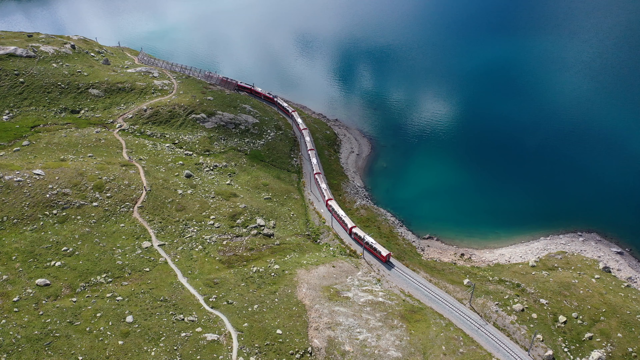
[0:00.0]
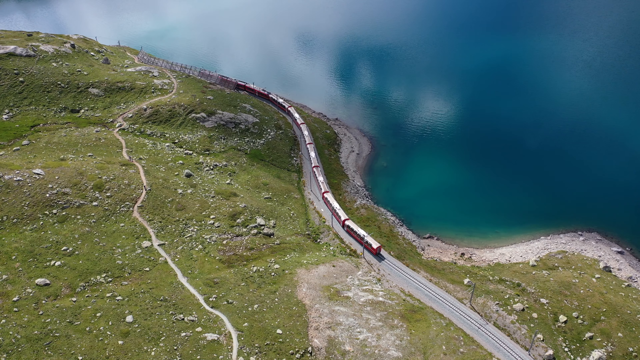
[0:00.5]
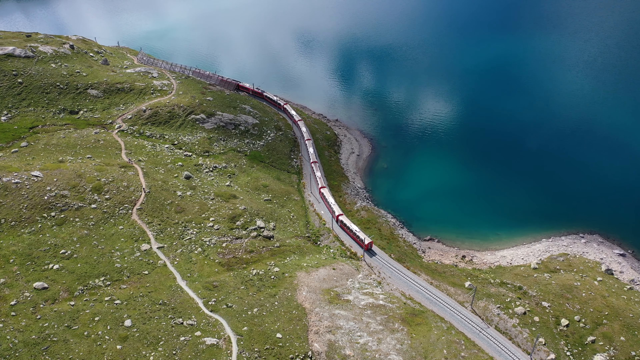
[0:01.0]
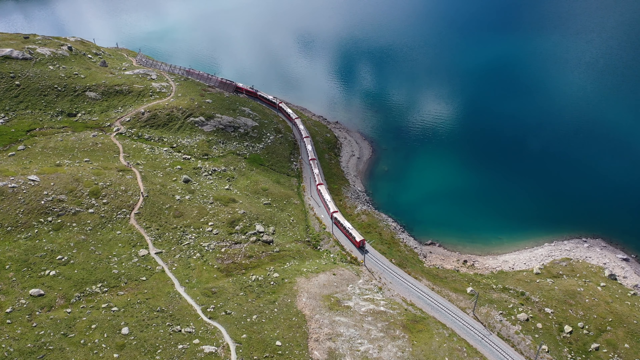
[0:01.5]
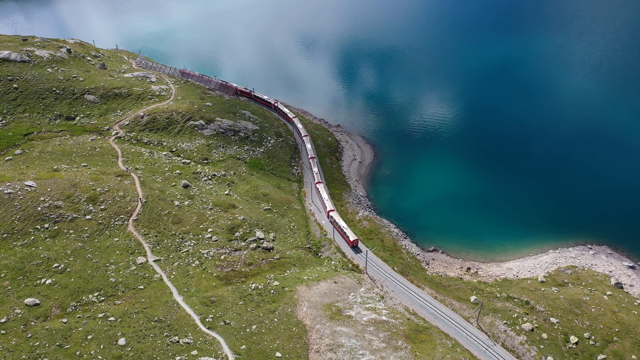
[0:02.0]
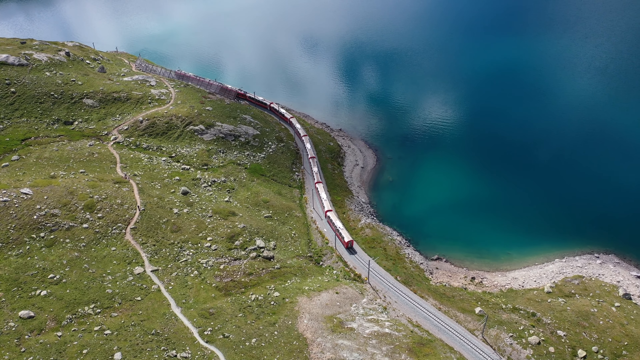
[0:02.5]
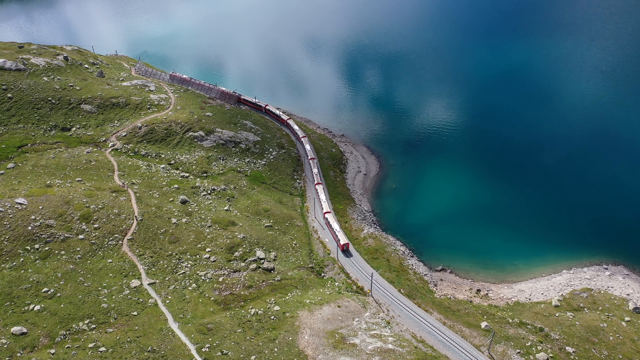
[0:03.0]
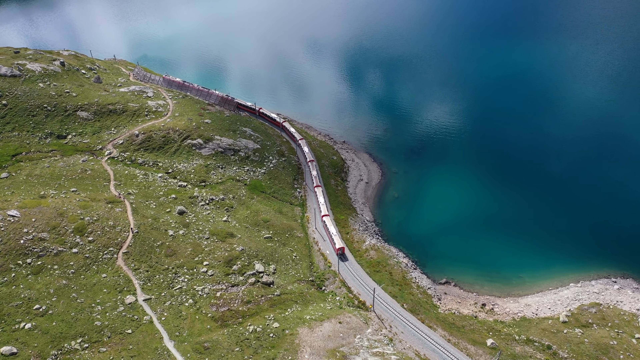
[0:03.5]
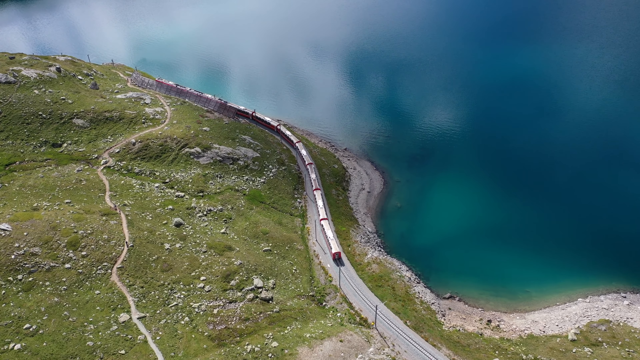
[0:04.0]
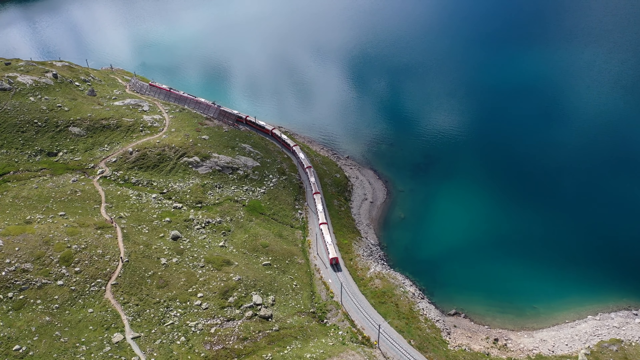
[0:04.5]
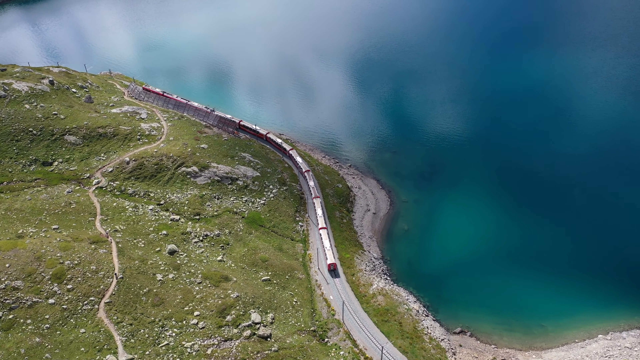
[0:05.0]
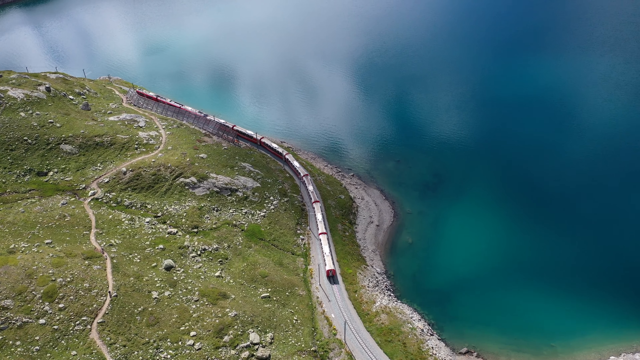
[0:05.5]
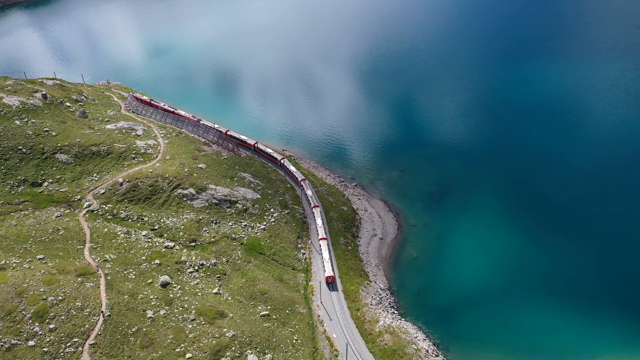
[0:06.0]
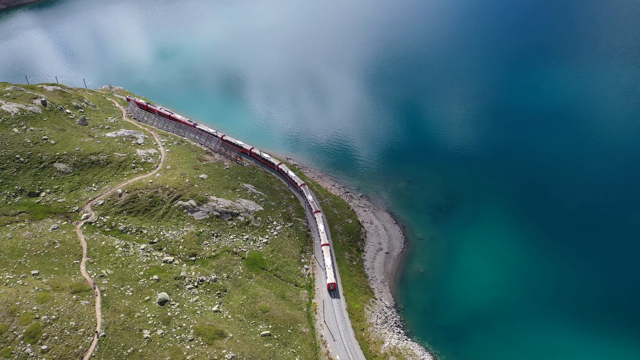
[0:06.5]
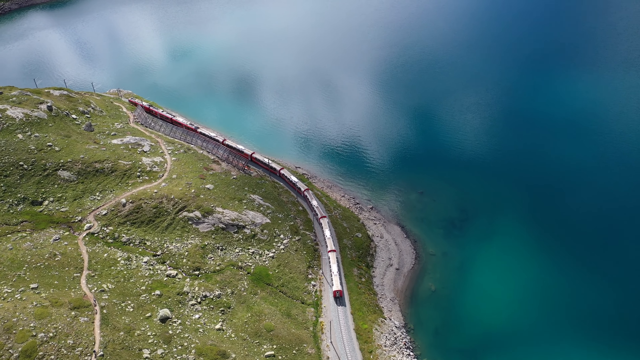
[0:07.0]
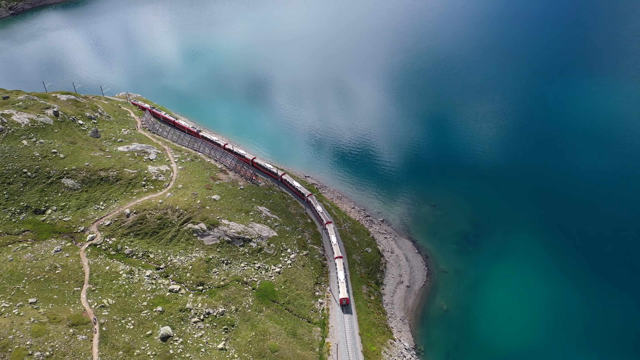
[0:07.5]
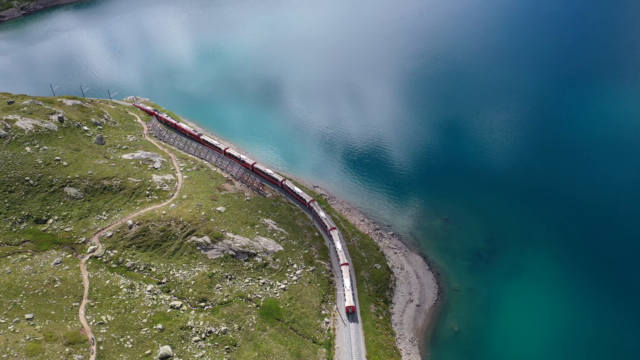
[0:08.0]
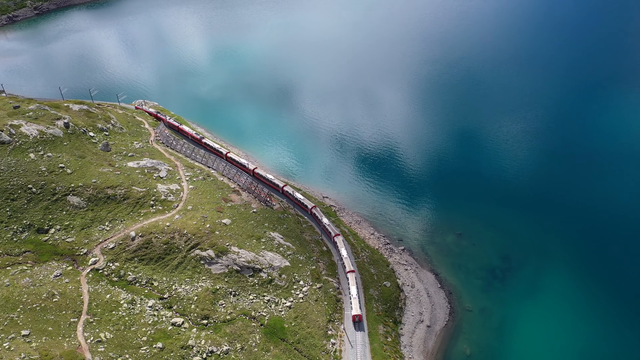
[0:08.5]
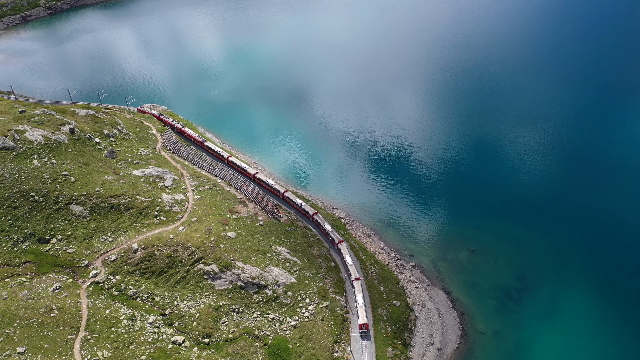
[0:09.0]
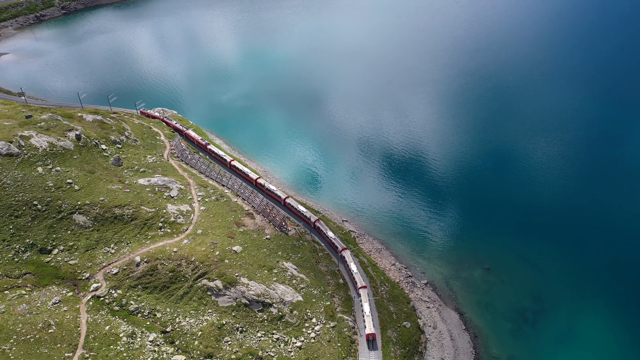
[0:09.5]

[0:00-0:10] What appears to be a passenger train progresses along the side of what looks like a lake, though it could perhaps be the seaside. To the left of the railway line is rocky land with a bit of grass on it. To the right of the railway line is a brilliantly blue lake with a small rocky shore.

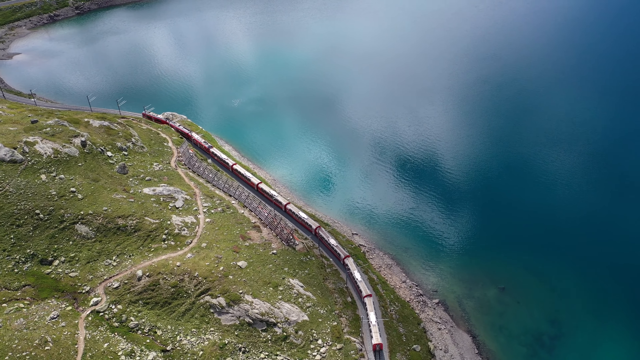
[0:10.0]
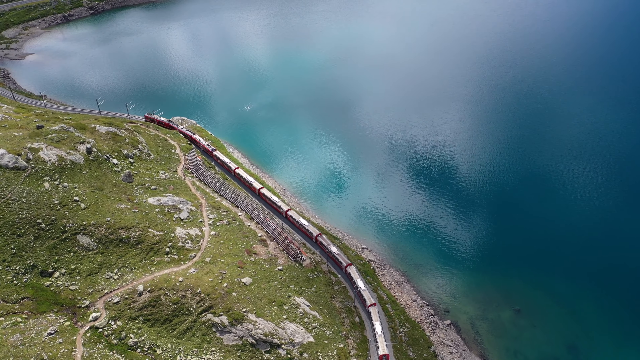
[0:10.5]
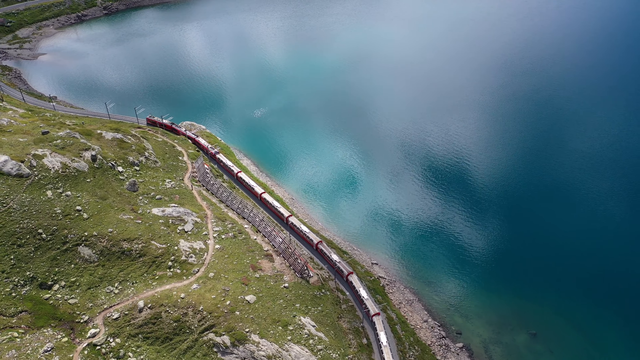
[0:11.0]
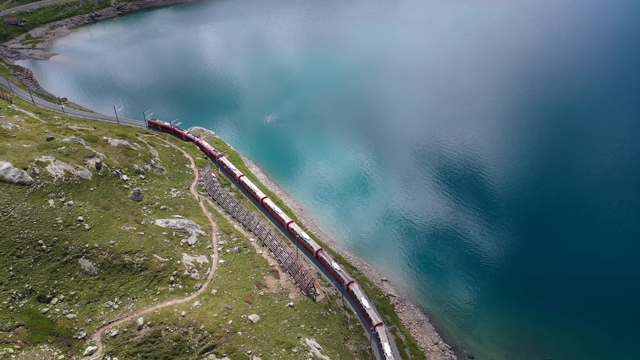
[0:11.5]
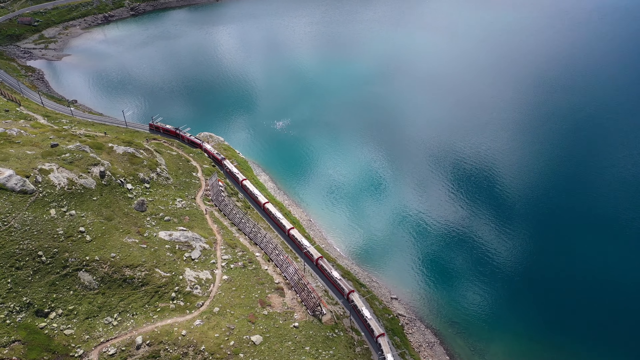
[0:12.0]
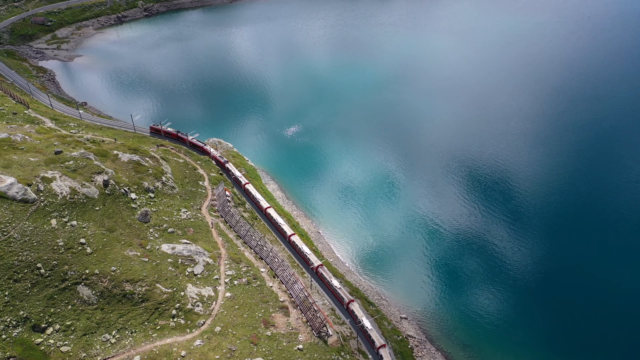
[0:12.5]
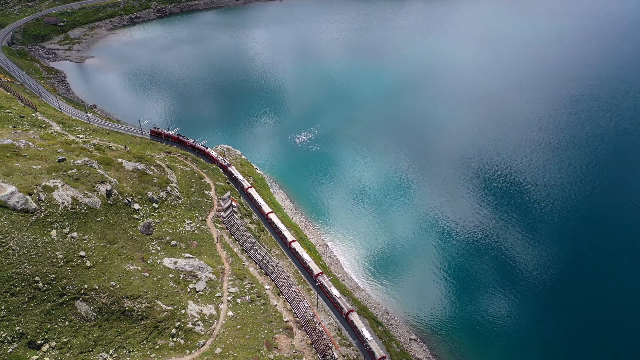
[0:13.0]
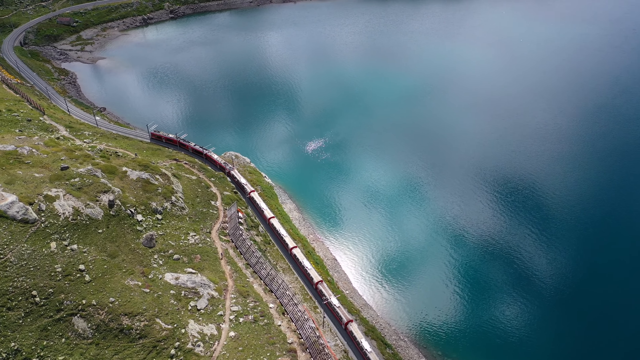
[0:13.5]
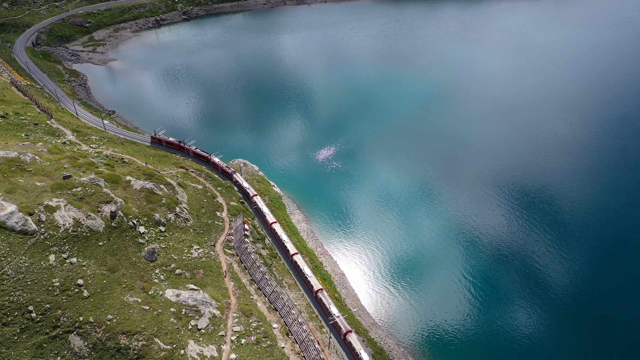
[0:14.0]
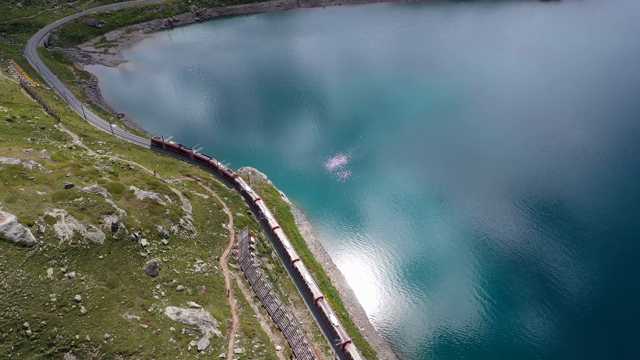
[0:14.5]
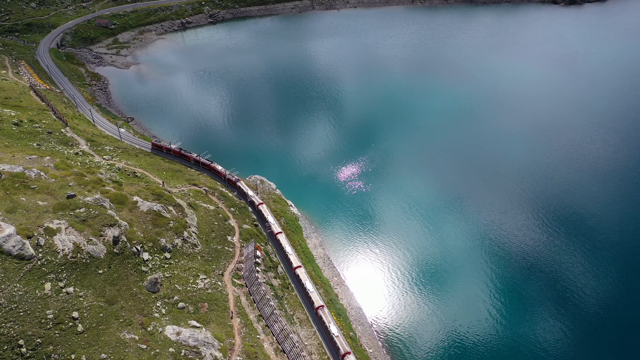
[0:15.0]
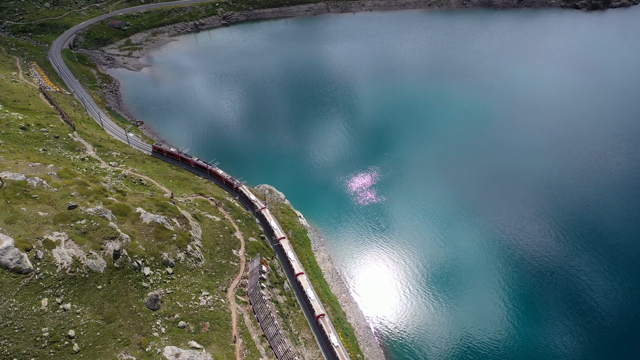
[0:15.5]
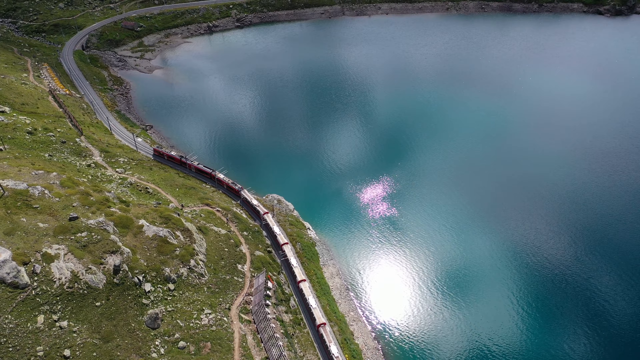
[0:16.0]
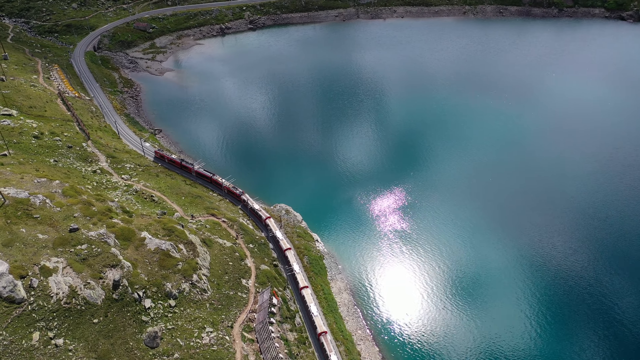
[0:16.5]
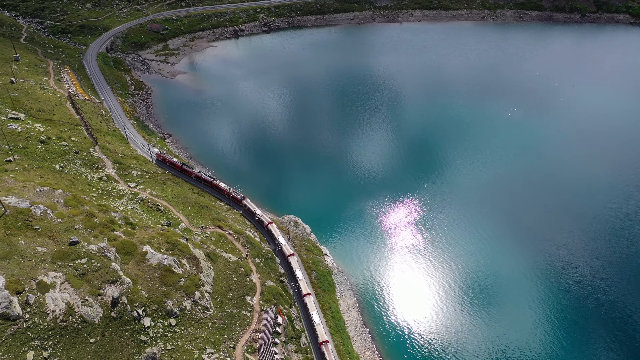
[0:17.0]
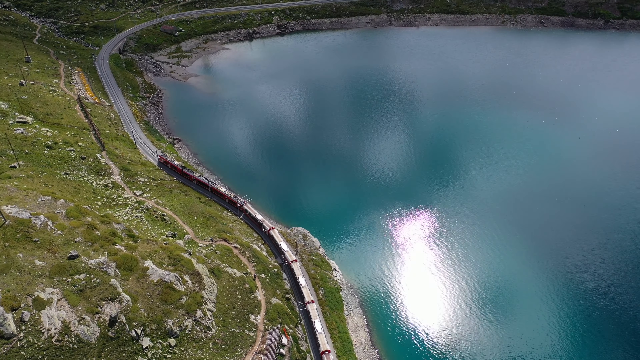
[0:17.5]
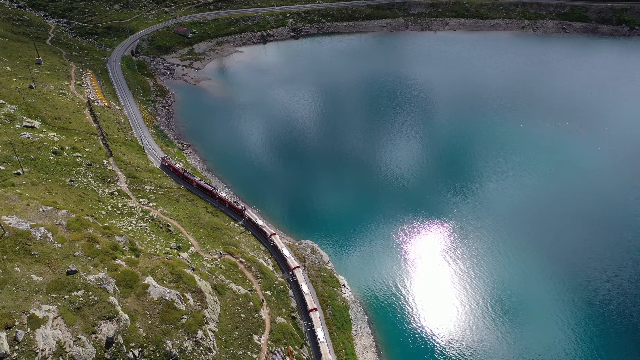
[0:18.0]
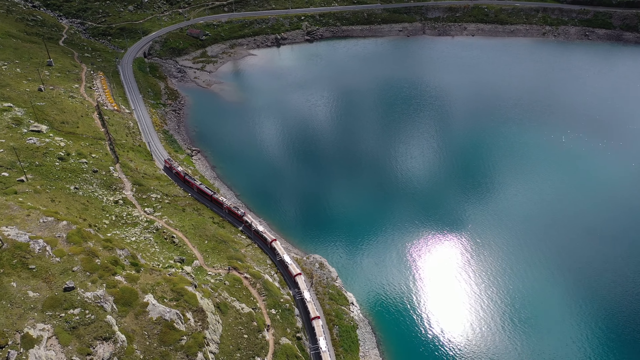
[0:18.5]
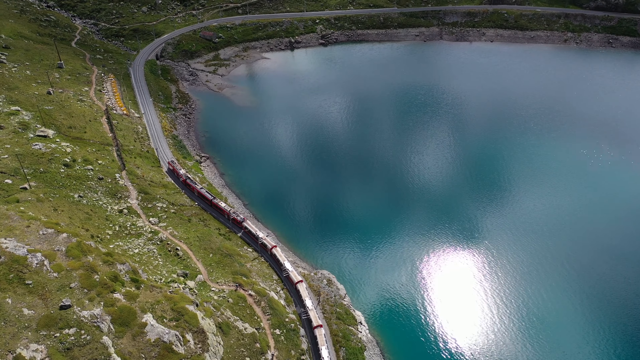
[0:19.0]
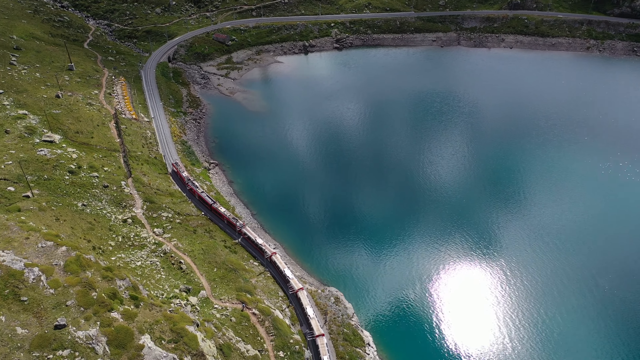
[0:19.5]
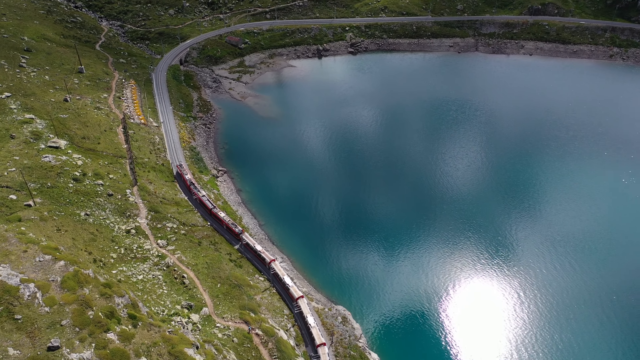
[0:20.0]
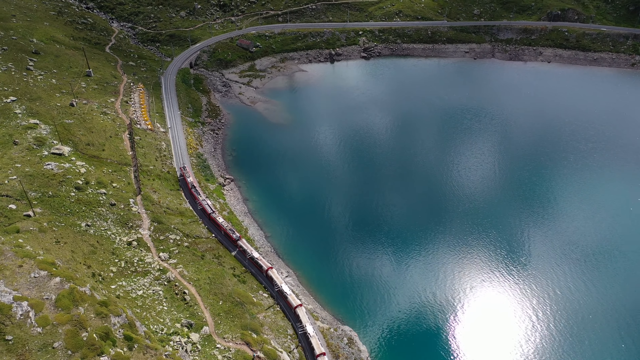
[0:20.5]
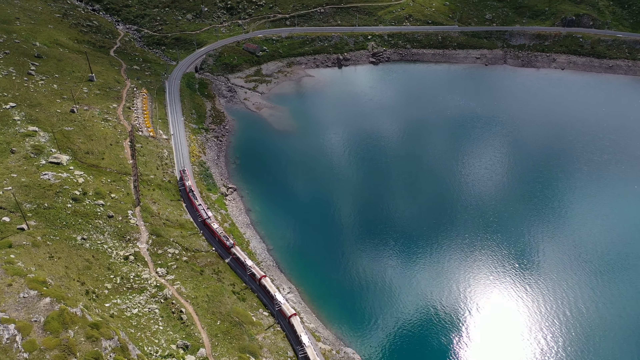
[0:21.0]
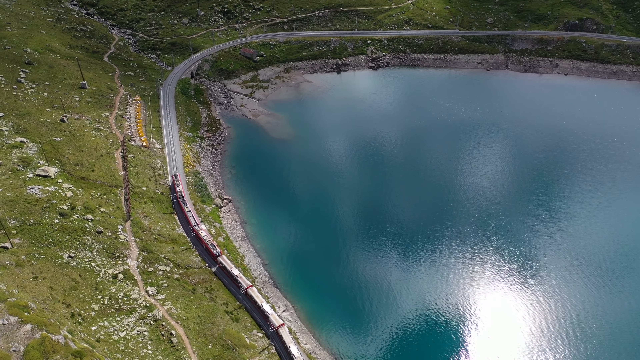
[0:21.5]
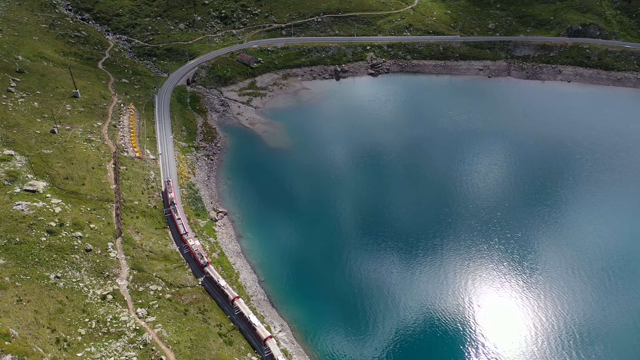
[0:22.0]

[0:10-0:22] The train continues alongside the lake, going round a very small headland and then coming slightly more inland, but only a few metres. The land side is still very rocky looking. Later the line reaches the end of the lake, where the railway line performs a 90 degree turn around it. There is no indication of human life around the lakeside other than the railway line itself and no buildings are visible; there might be a footpath next to the railway line.